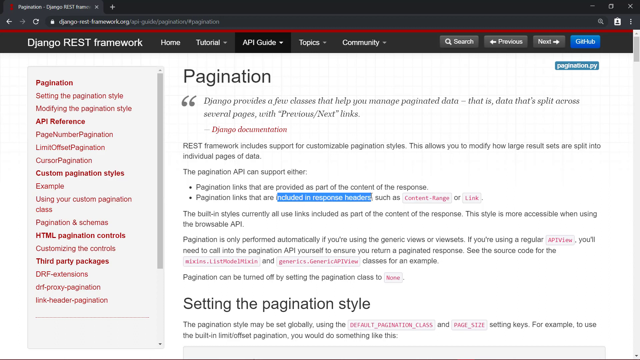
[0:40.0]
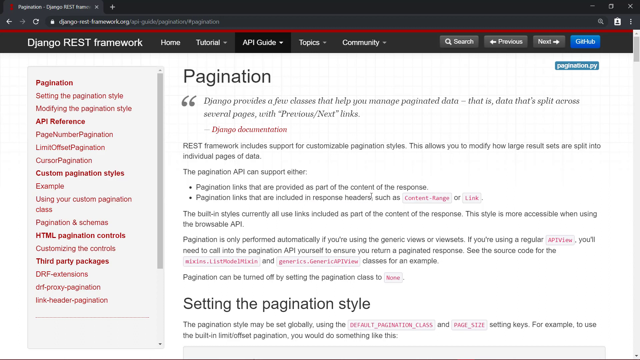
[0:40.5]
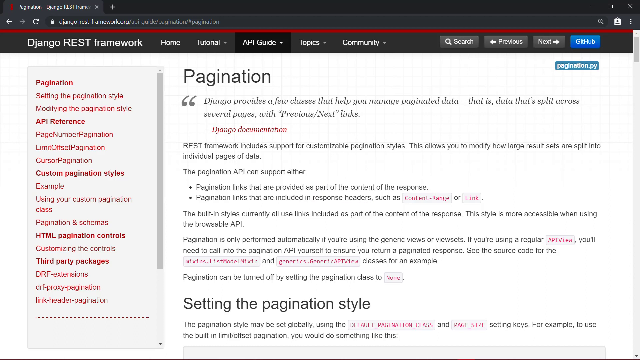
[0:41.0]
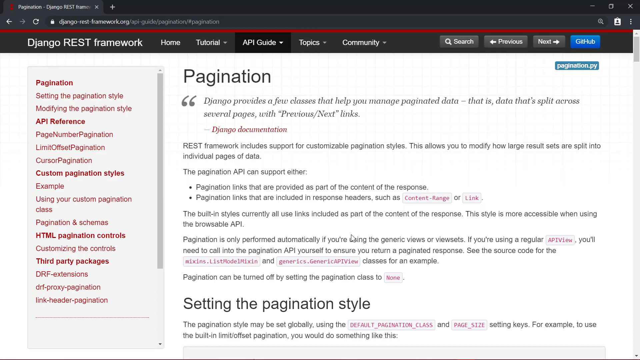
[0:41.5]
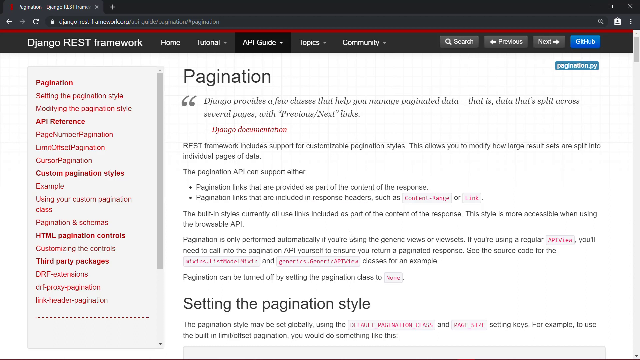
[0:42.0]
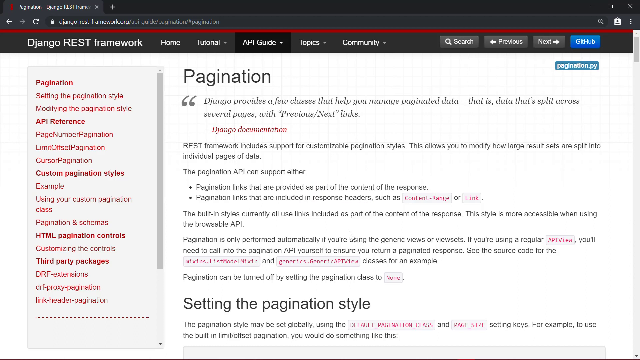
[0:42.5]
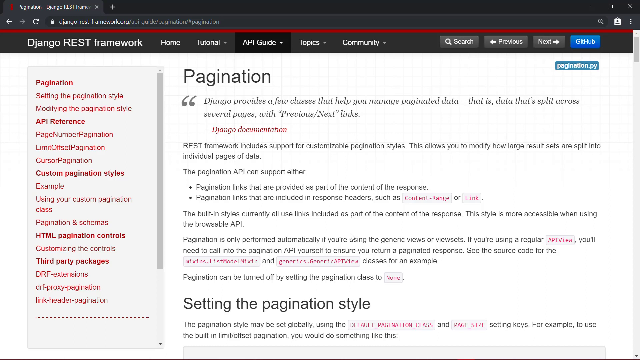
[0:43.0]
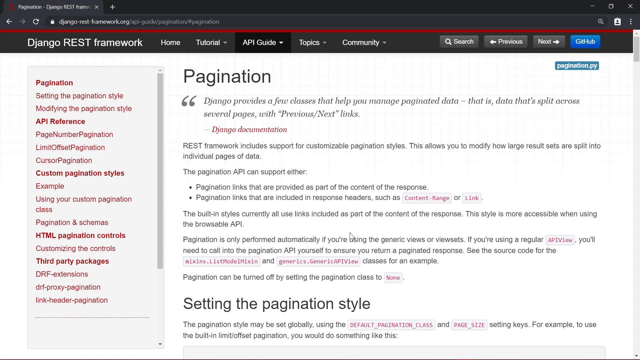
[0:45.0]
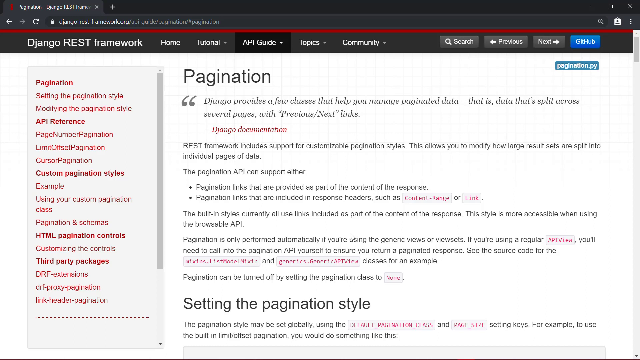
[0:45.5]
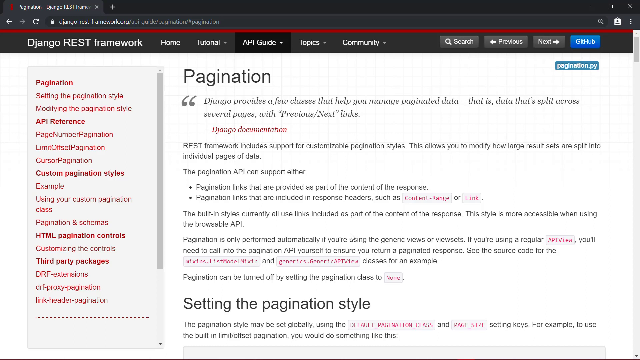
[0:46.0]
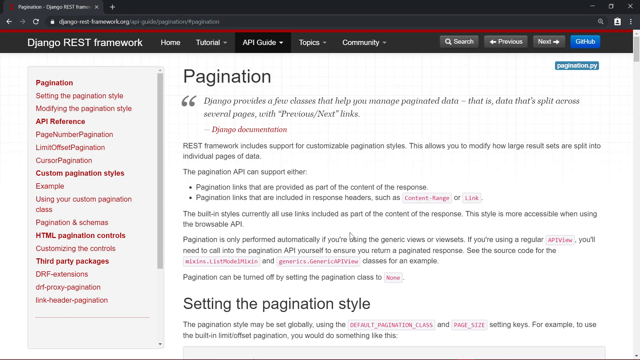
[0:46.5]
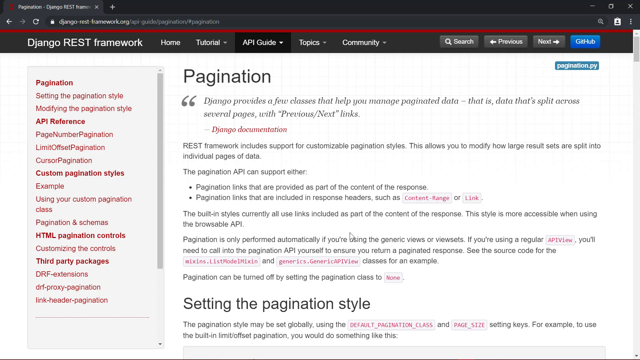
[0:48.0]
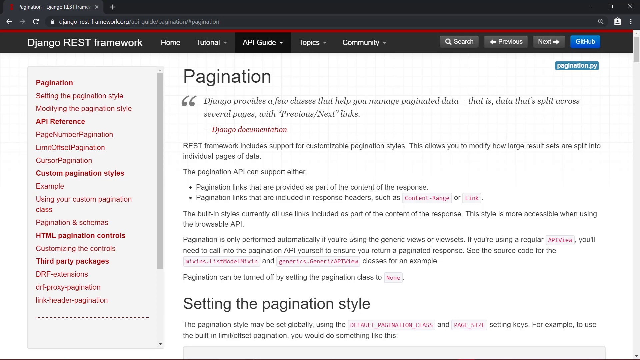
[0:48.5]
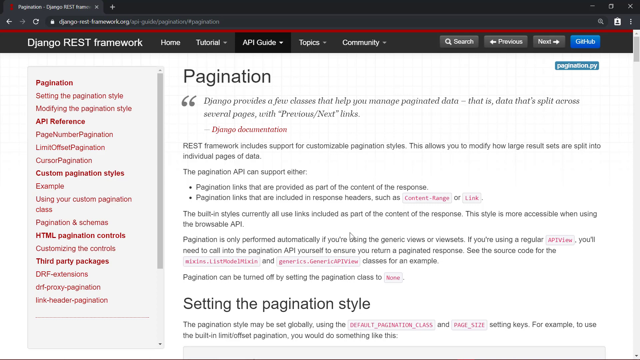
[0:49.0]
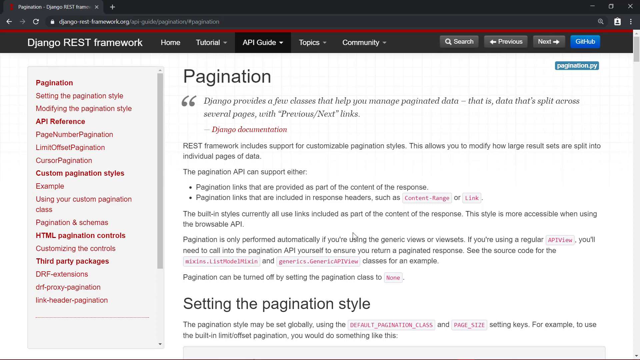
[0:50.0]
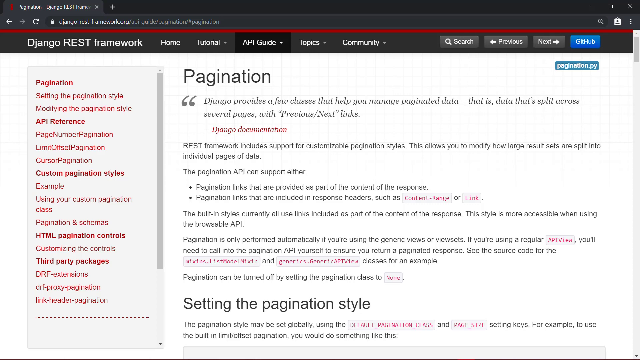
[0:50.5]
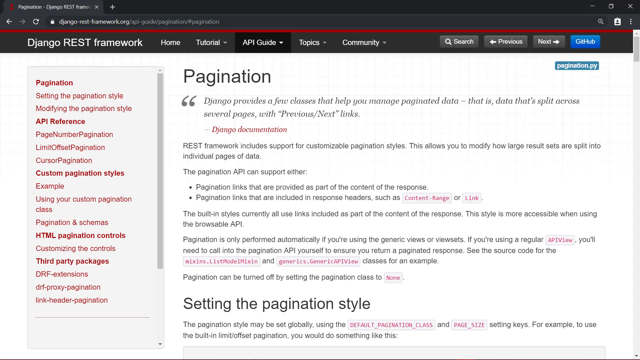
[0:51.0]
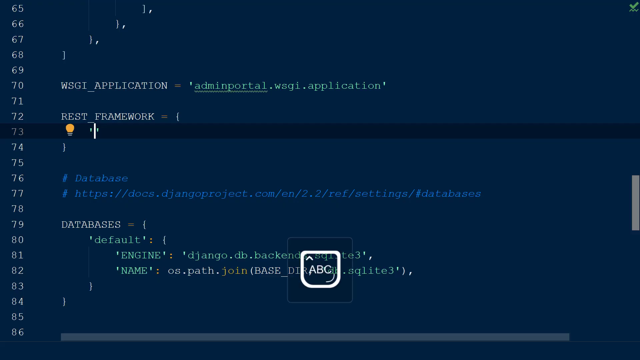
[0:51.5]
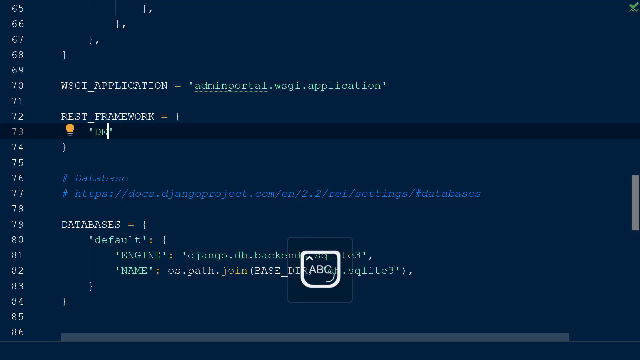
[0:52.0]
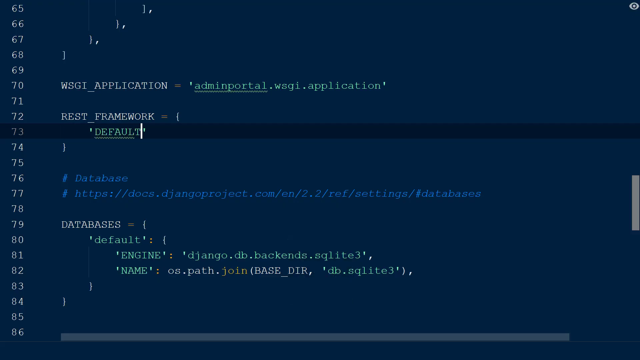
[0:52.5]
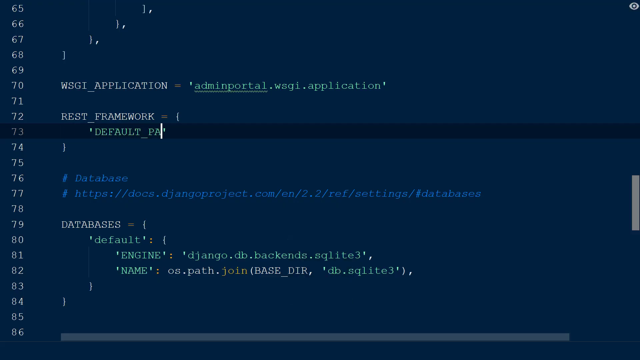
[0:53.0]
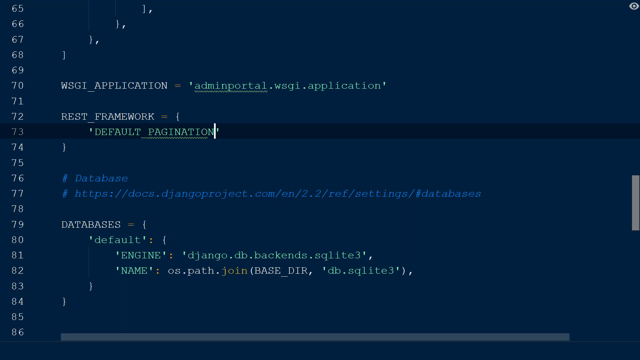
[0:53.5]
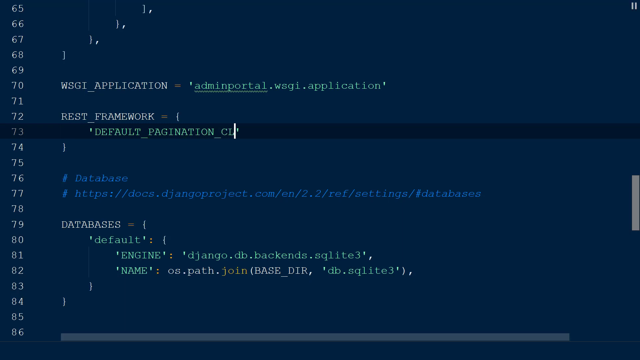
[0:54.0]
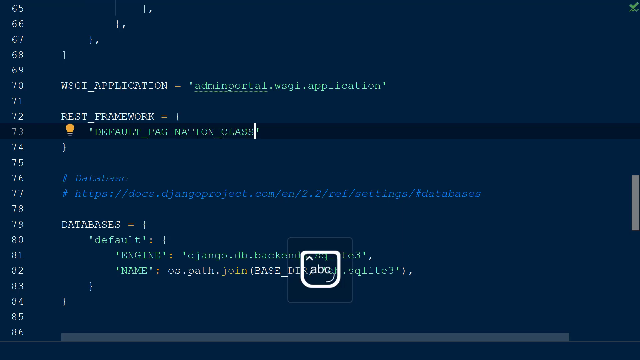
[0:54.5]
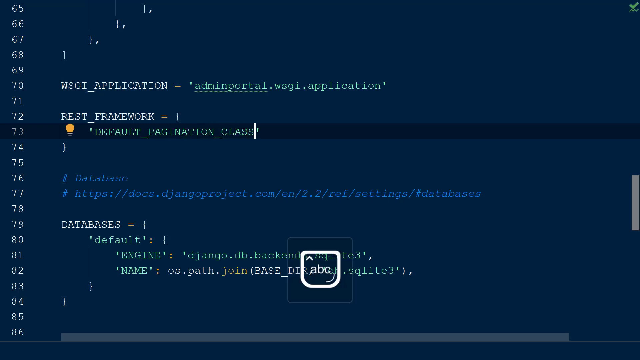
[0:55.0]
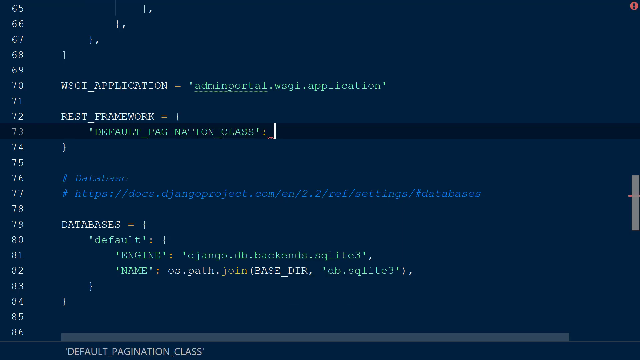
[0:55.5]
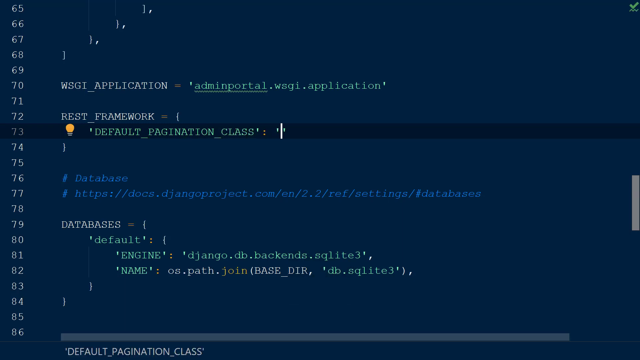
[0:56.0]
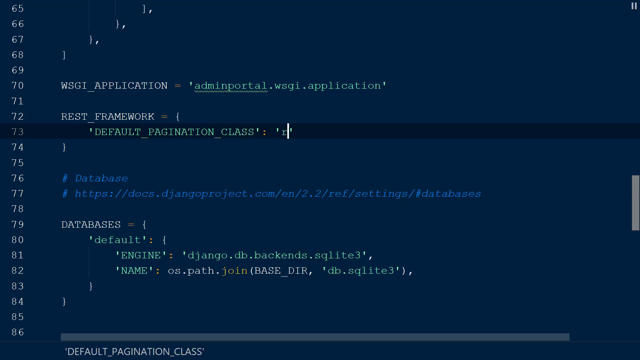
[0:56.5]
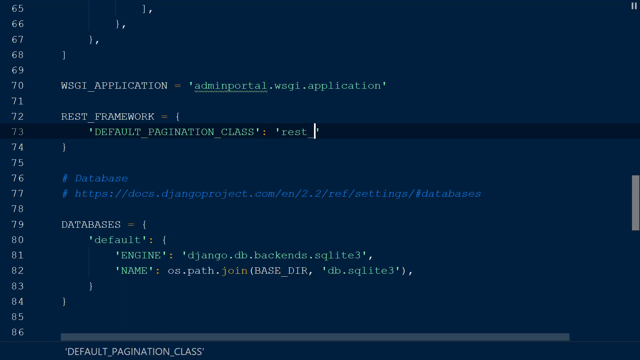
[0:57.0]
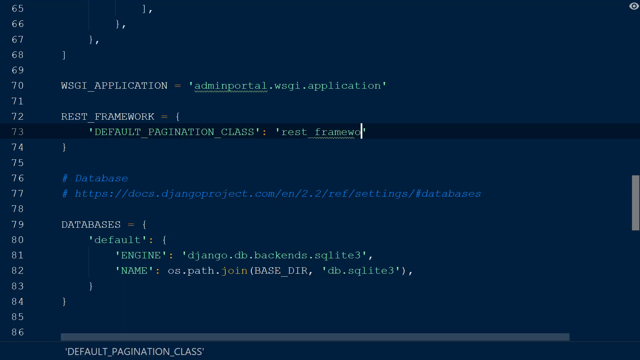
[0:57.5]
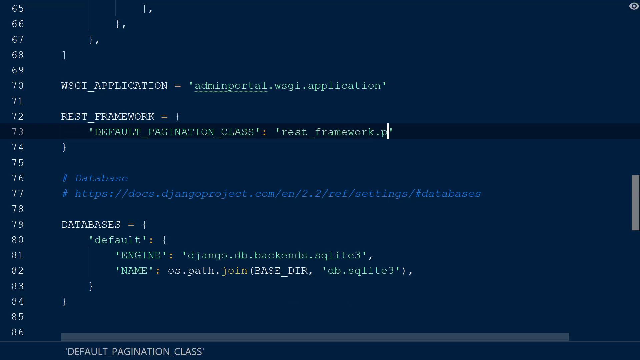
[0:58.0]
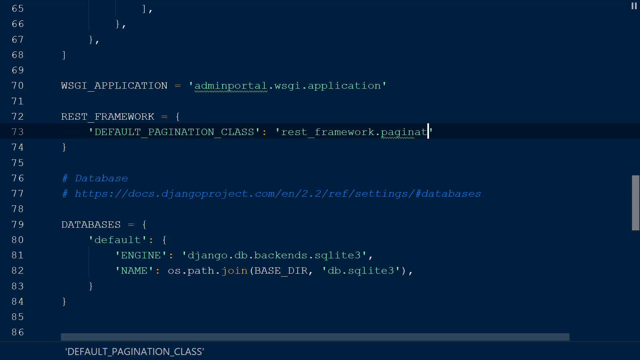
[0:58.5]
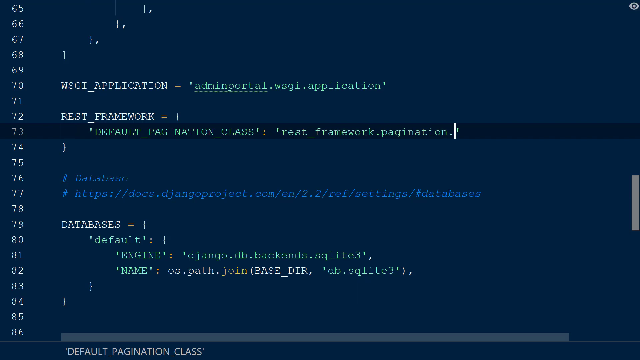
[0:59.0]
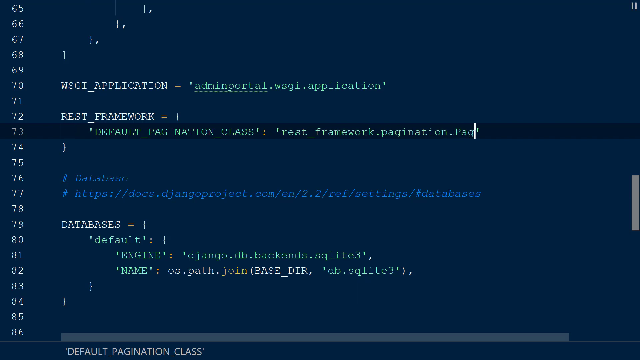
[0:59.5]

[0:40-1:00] The same documentation page continues, with text reading "REST framework includes support for customizable pagination styles. This allows you to modify how large results sets are split into individual pages of data. The pagination API can support either 1. Pagination links that are provided as part of the content of the response. 2. Pagination links that are included in the response header". The page seems to give an overview of pagination. On the left-hand side are sections for pagination, setting the pagination style, modifying the pagination style, and the API reference, along with page number pagination, limit offset pagination, cursor pagination, custom pagination styles, an example, and using a custom pagination class. The view then returns to the code, where the person is writing "default_pagination_class" and REST framework pagination.